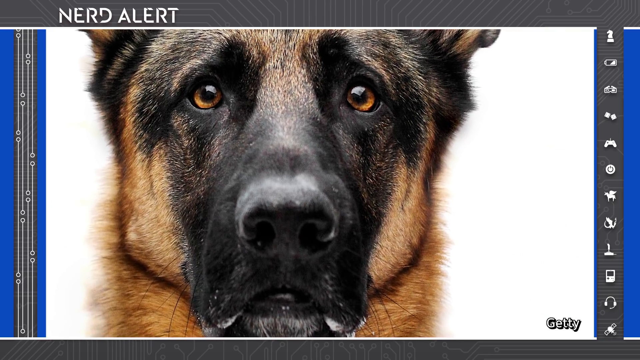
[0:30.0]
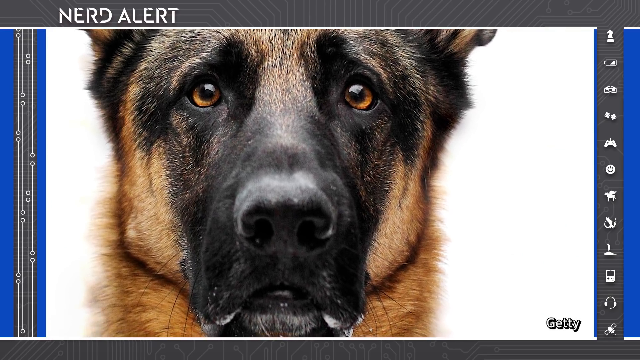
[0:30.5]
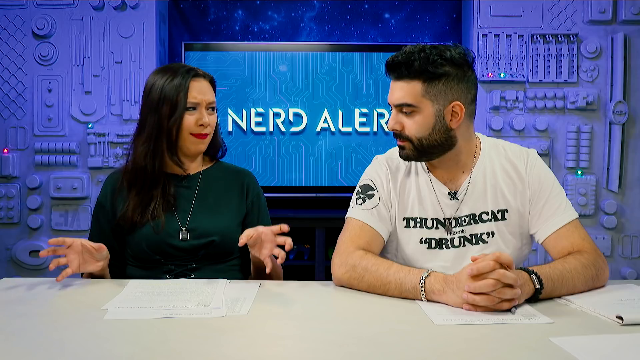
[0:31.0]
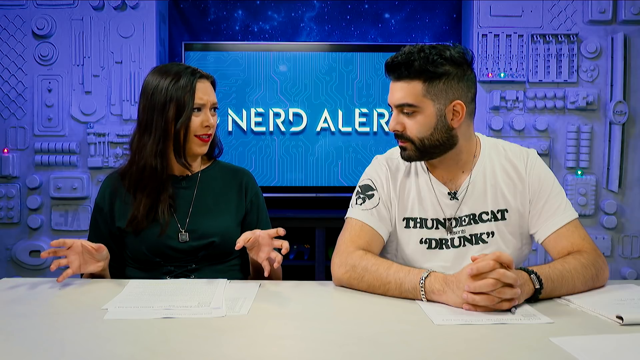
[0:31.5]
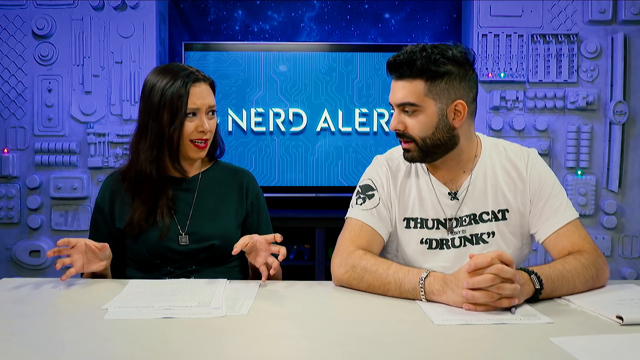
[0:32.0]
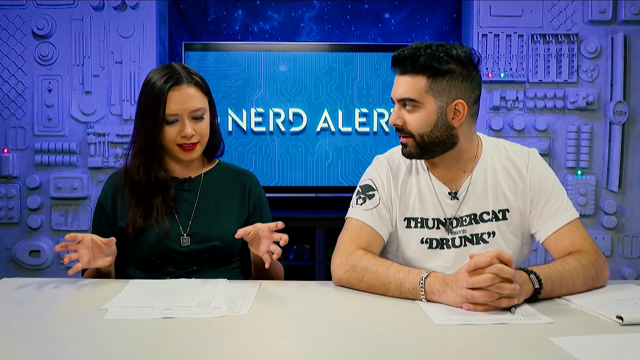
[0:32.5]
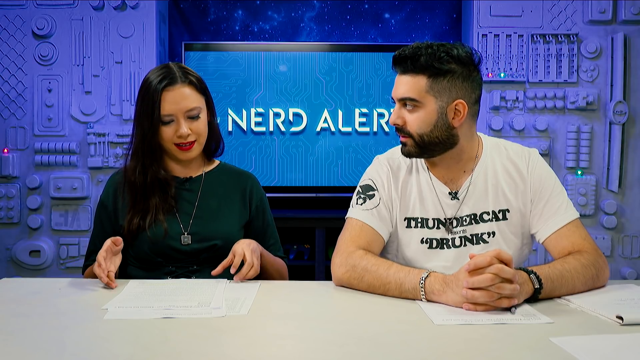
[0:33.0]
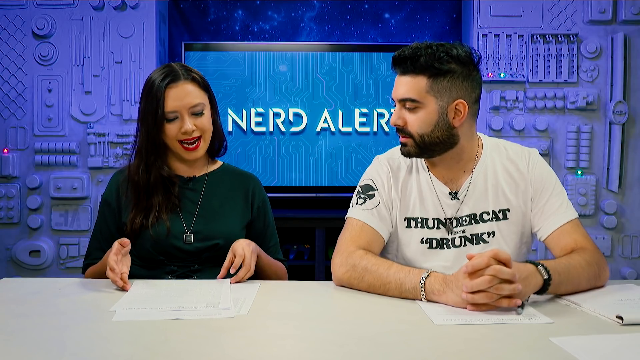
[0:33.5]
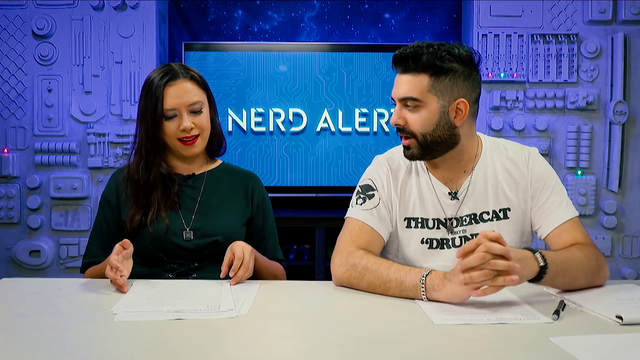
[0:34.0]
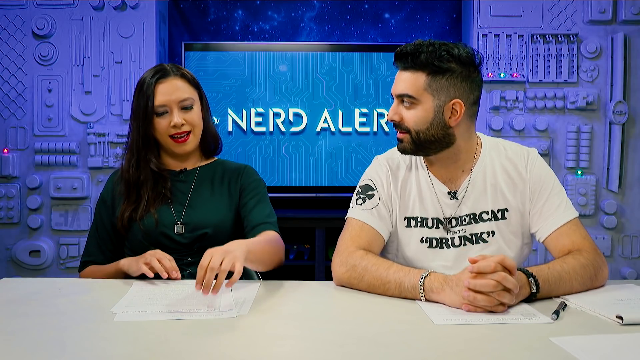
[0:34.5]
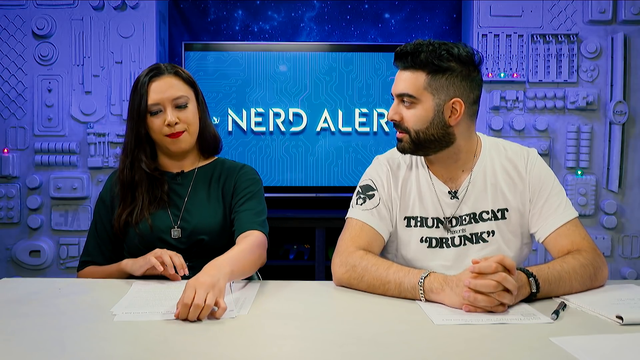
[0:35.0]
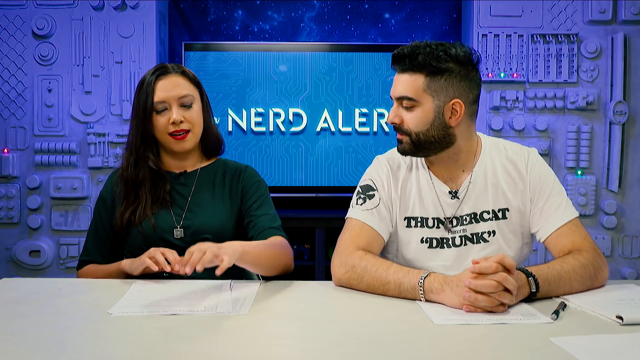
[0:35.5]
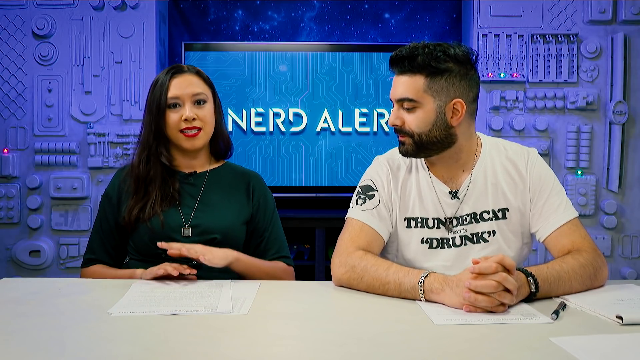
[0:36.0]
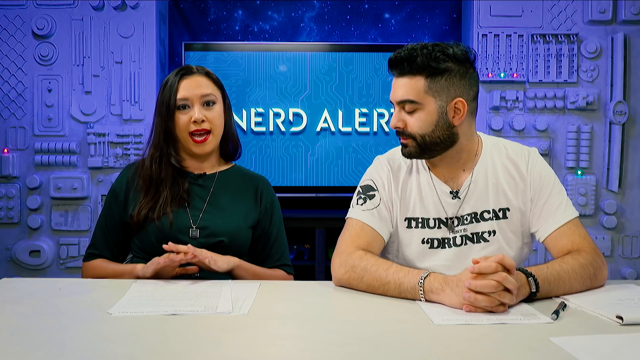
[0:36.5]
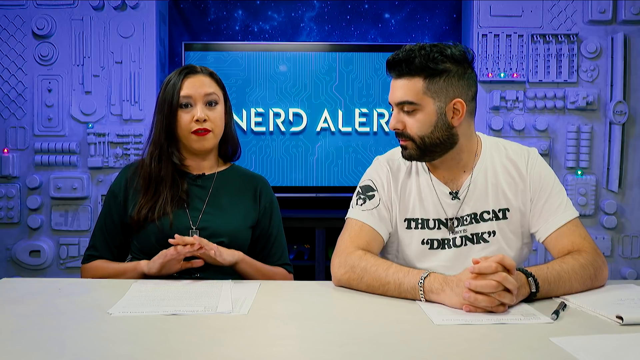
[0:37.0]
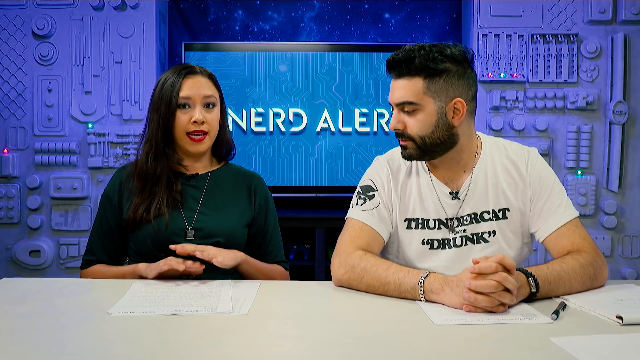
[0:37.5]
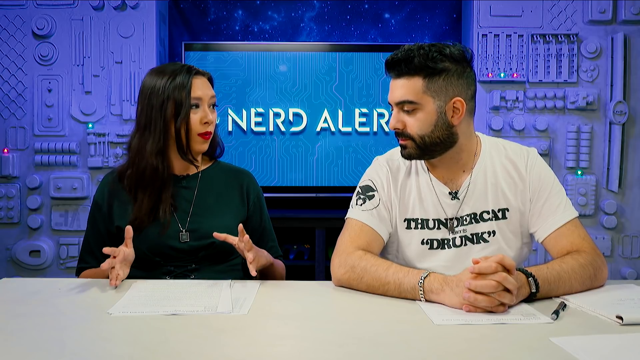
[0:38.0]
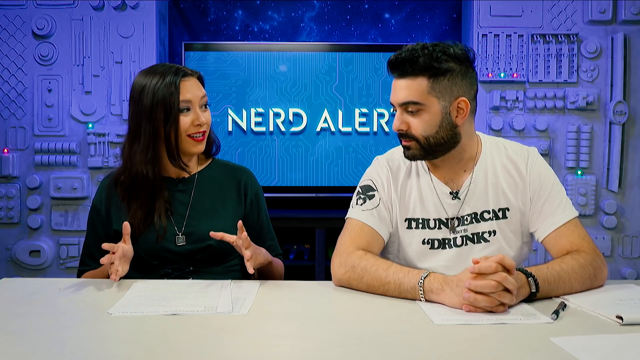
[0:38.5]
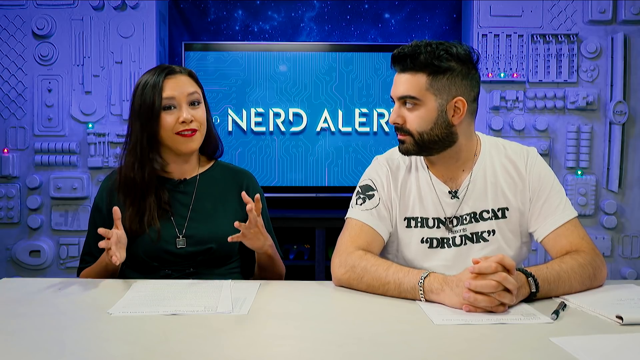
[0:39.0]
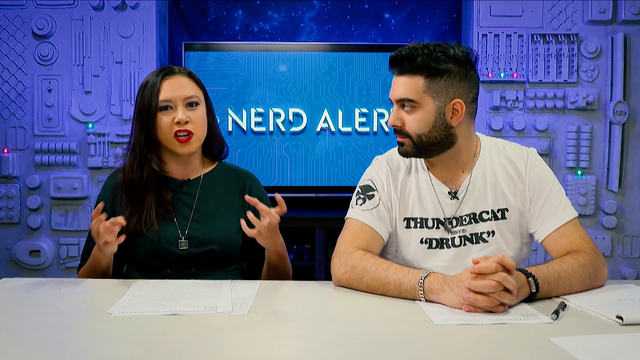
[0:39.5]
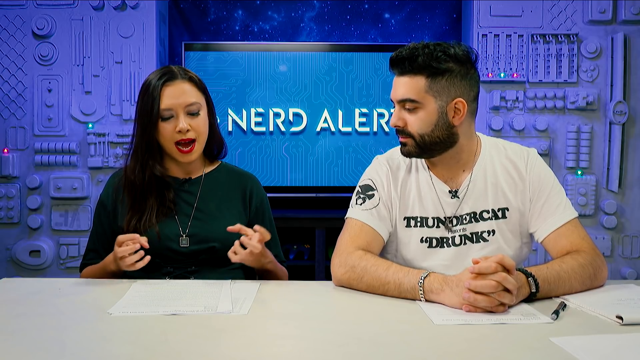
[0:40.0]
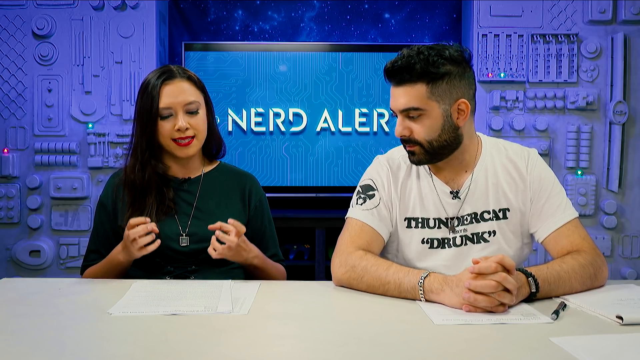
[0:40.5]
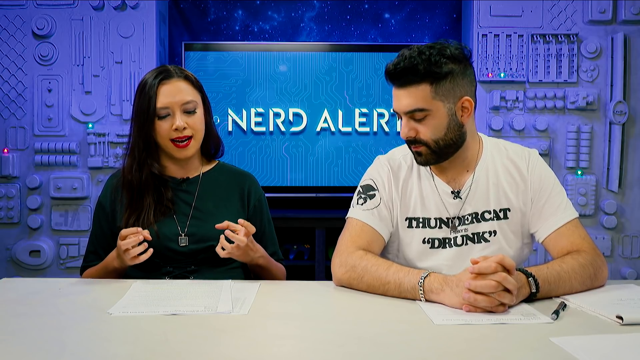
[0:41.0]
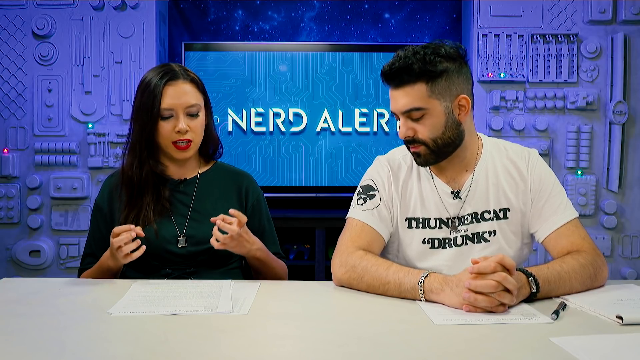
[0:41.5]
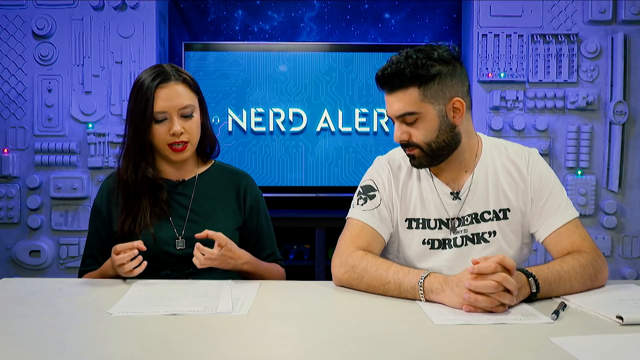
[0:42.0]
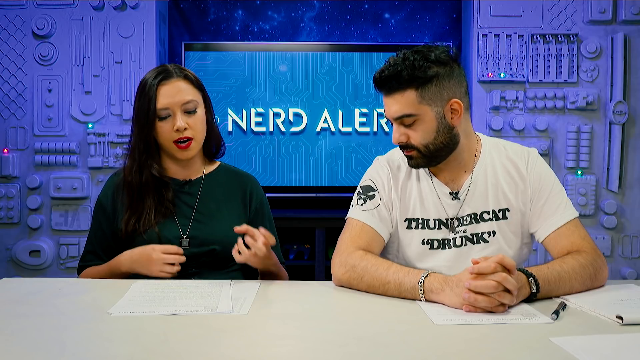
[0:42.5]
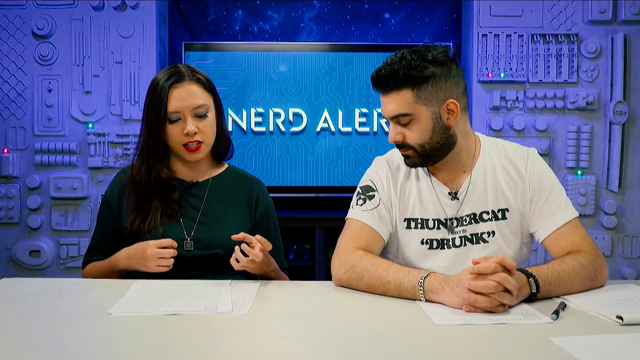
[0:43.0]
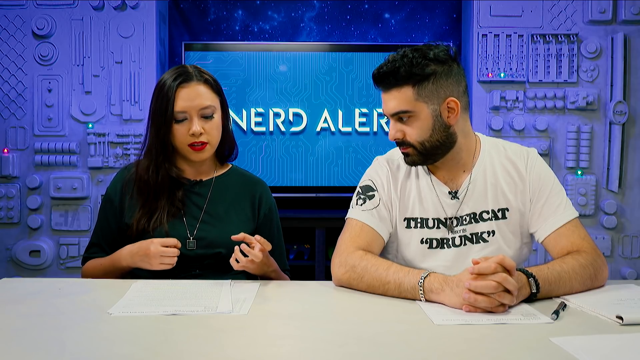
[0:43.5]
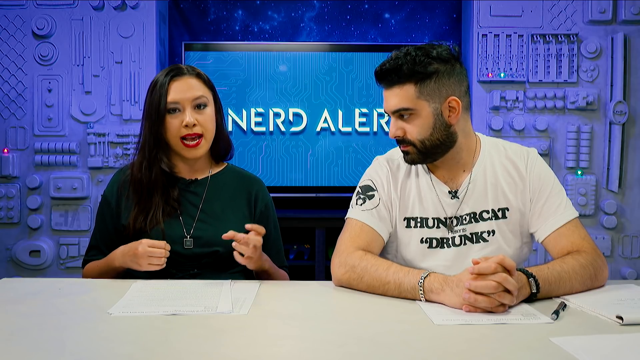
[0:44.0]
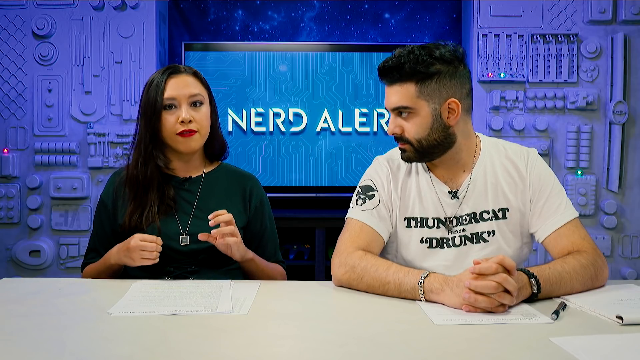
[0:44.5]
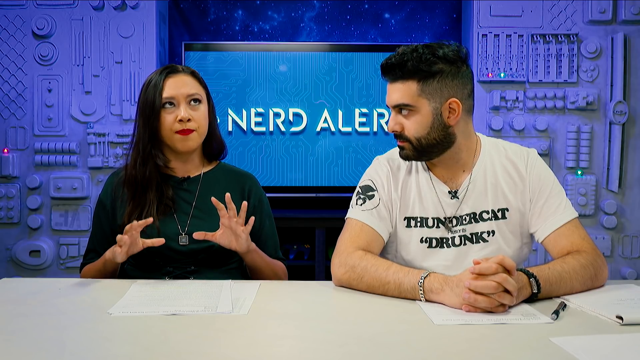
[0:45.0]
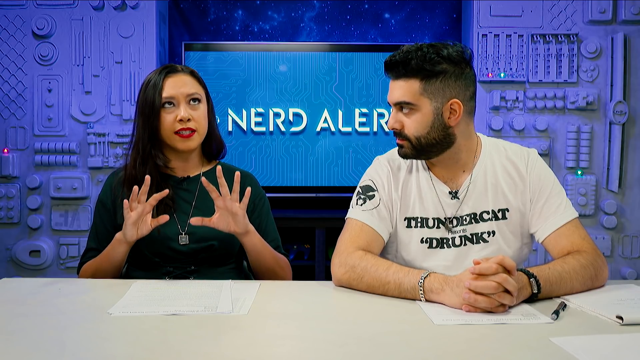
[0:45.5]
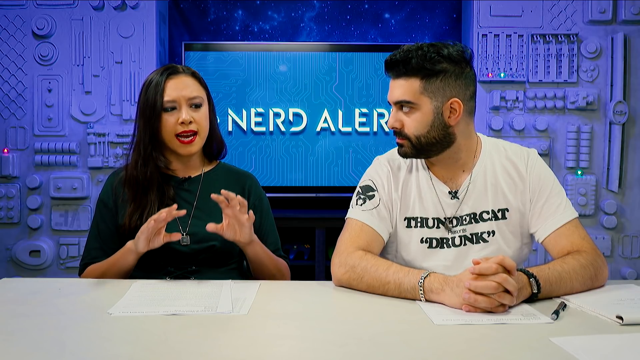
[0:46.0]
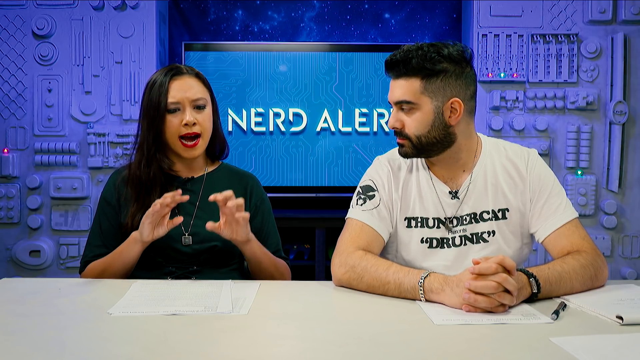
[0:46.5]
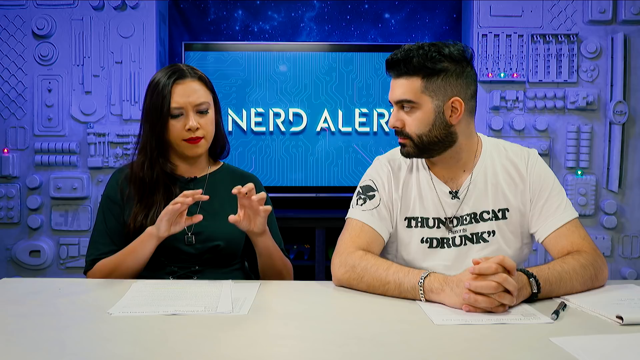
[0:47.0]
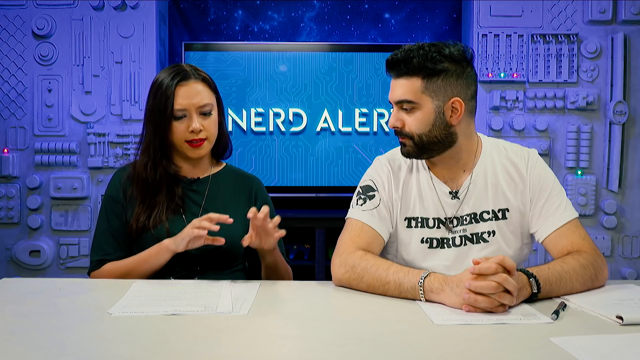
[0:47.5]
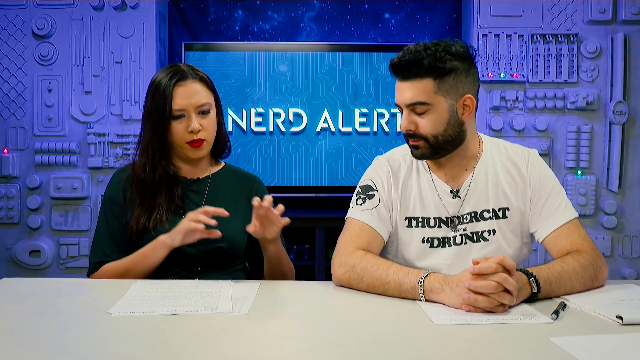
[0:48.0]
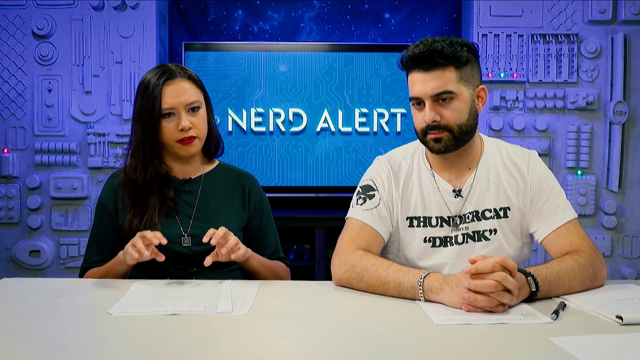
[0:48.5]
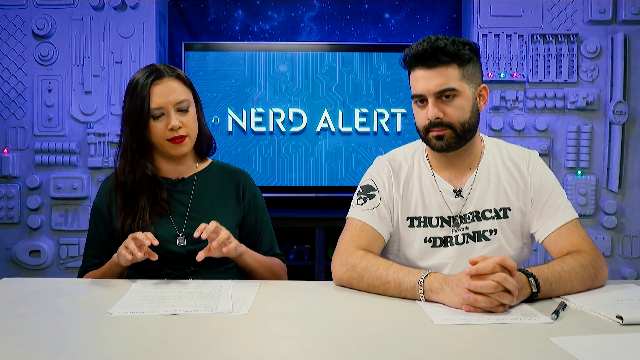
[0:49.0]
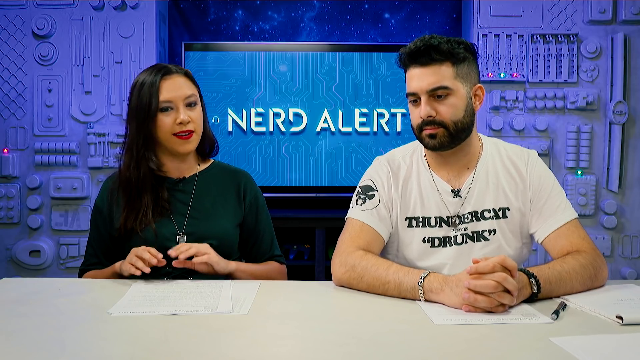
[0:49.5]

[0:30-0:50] A screen shows a black police dog with some brownish color on its face, looking at the camera, with the text "nerd alert". A close-up then shows a man and a woman. The woman wears a green top, red lipstick and a necklace, and has long black hair. She explains while looking at the man, with some white papers in front of her, lifting her hand and making shapes with her fingers, looking down at the paper and back at the man. The man wears a white T-shirt with "Thundercats drunk" written on the front, a necklace, a black wristwatch on his left side and a silver bracelet on his left side. There are papers in front of him too, and he has a black pen. He leans on a white desk. In the background, "nerd alert" is written on a screen, and behind that is something that looks like an electrical box, with a flashing light on the right side and more green and red lights on the left side.